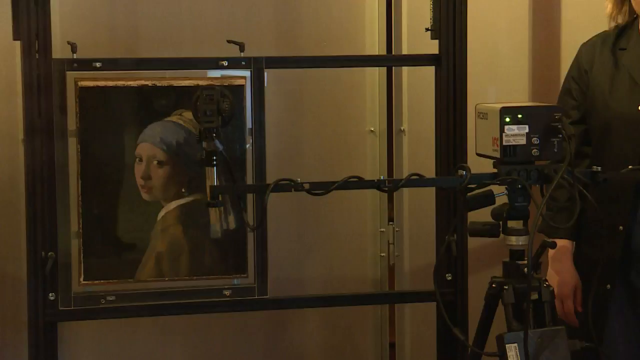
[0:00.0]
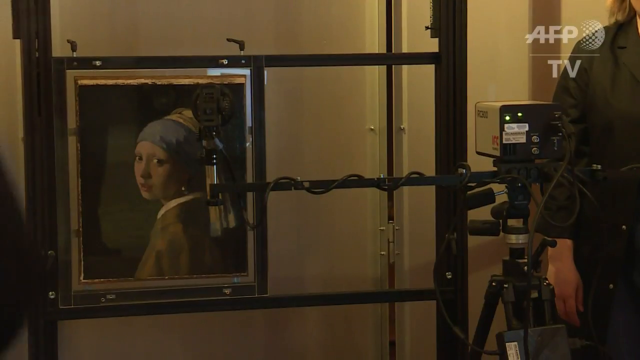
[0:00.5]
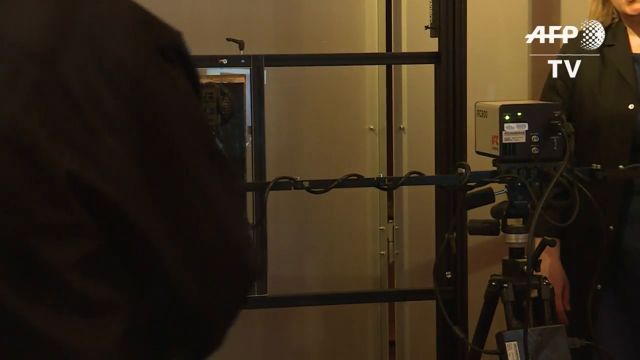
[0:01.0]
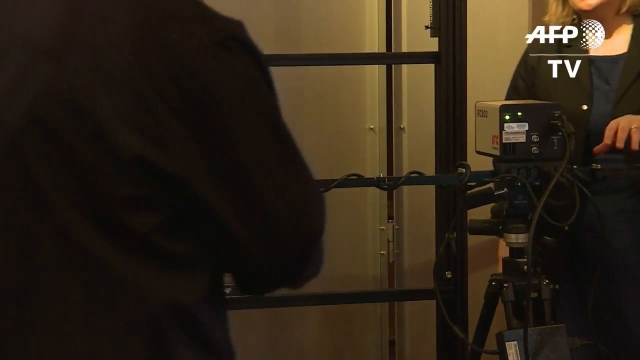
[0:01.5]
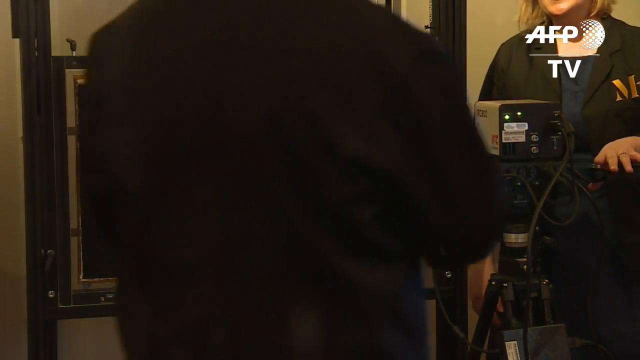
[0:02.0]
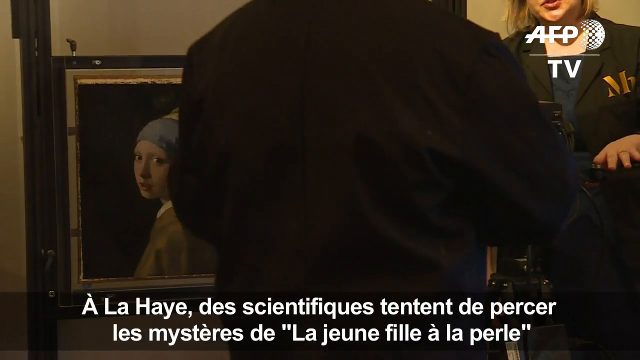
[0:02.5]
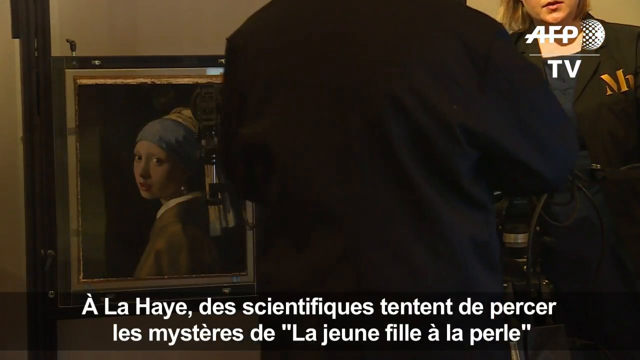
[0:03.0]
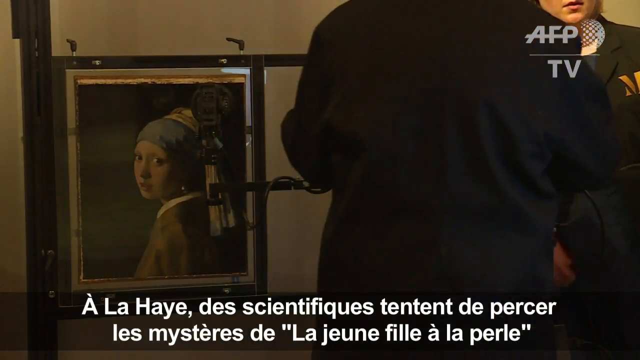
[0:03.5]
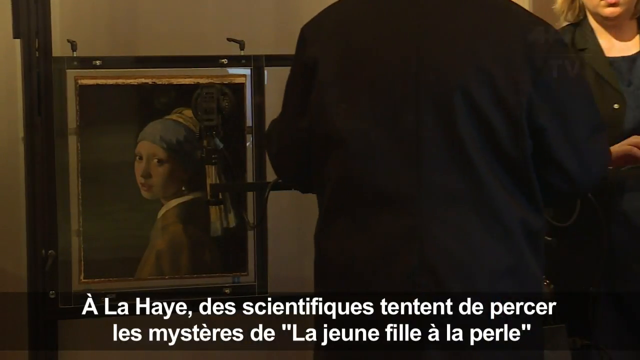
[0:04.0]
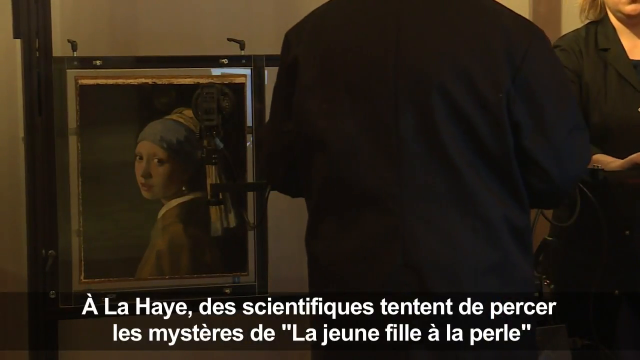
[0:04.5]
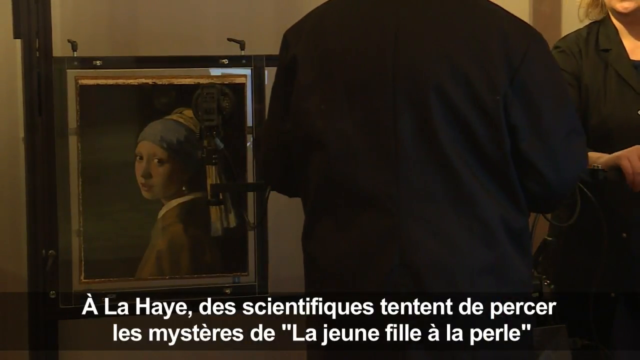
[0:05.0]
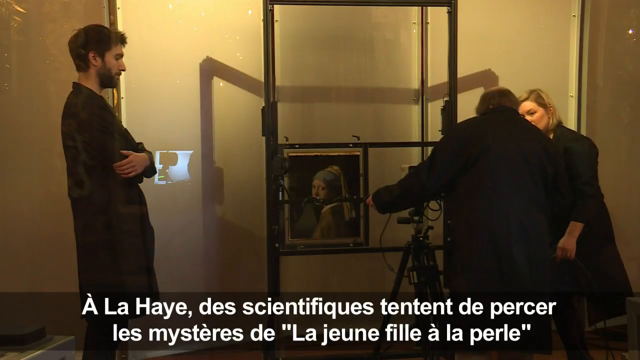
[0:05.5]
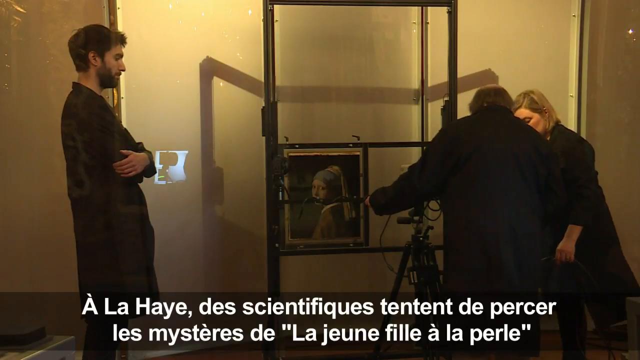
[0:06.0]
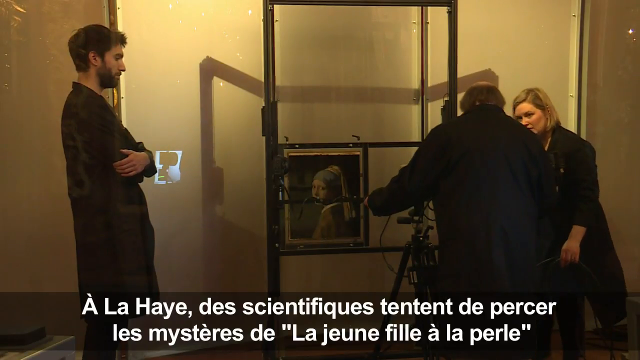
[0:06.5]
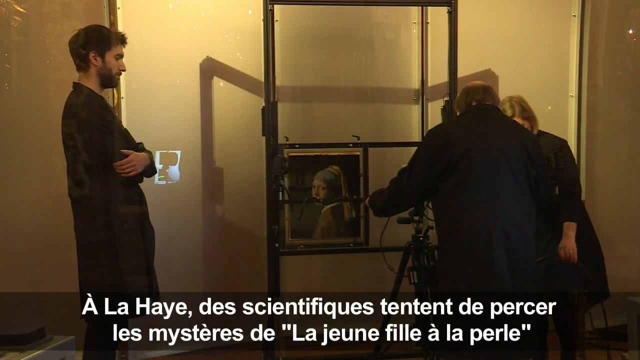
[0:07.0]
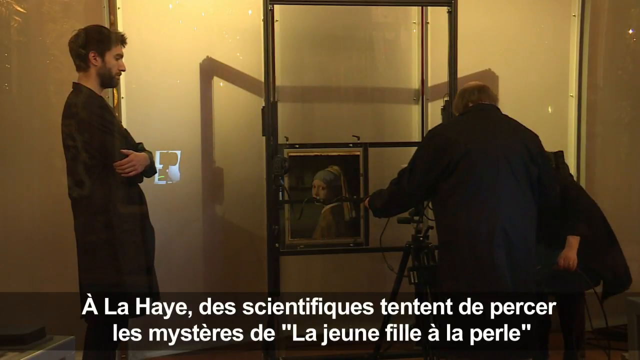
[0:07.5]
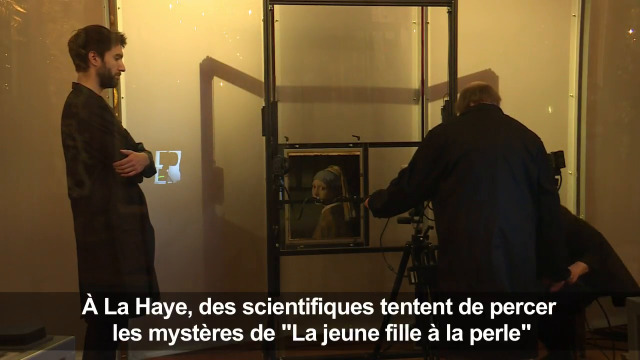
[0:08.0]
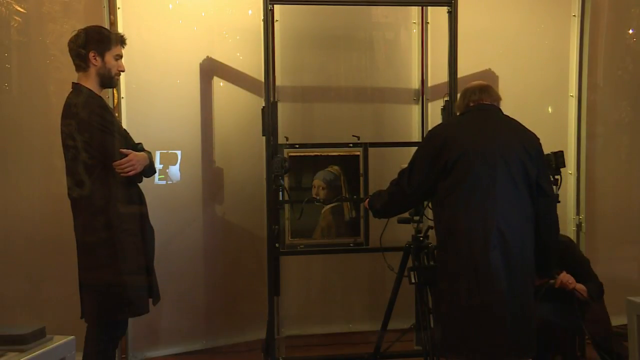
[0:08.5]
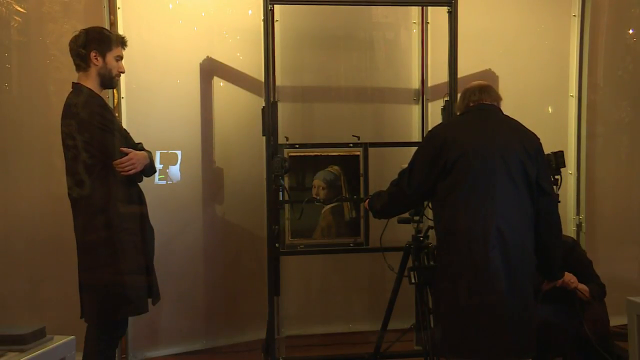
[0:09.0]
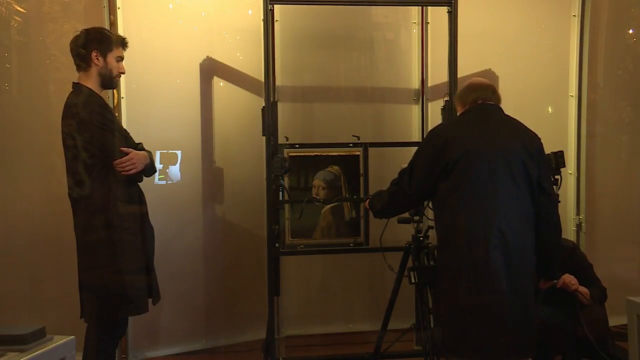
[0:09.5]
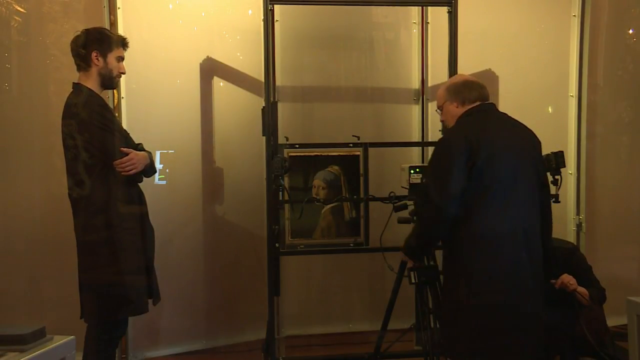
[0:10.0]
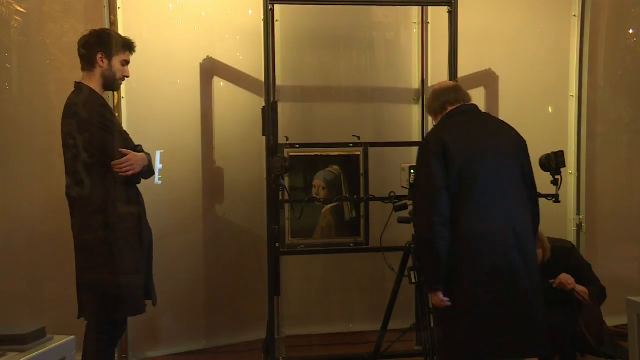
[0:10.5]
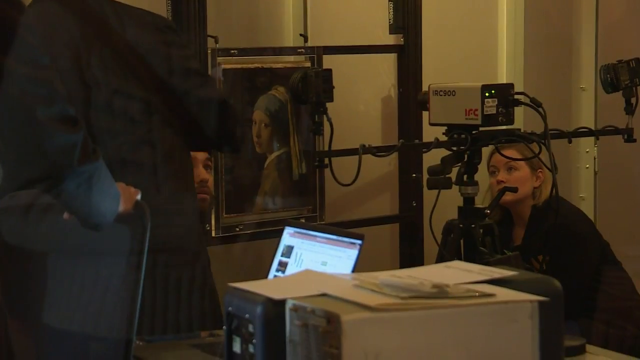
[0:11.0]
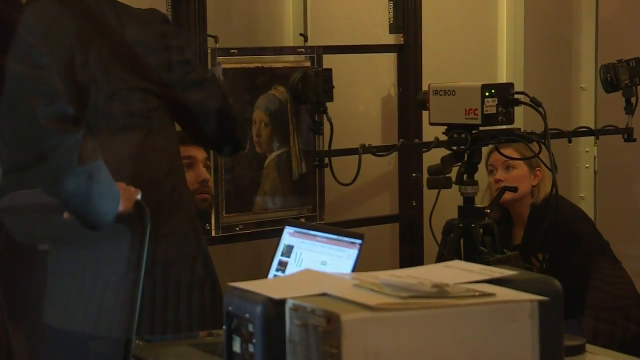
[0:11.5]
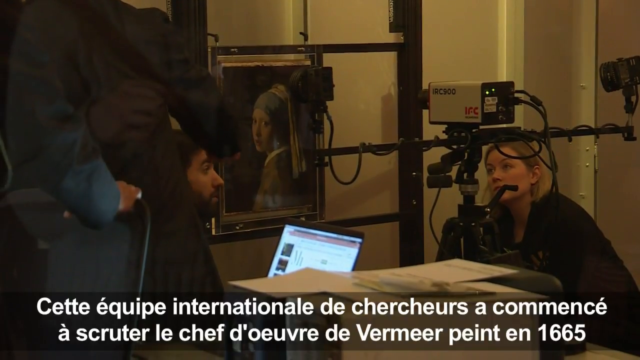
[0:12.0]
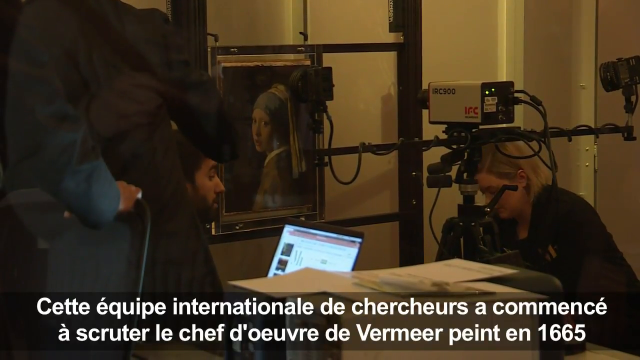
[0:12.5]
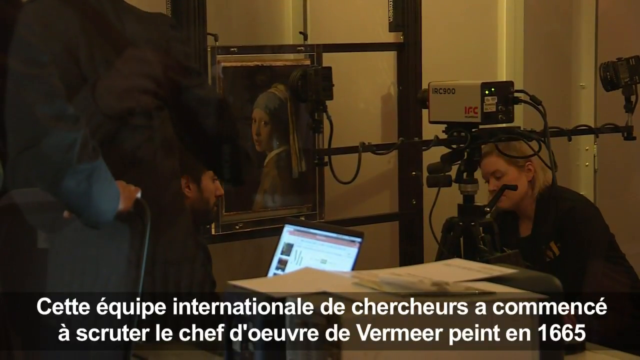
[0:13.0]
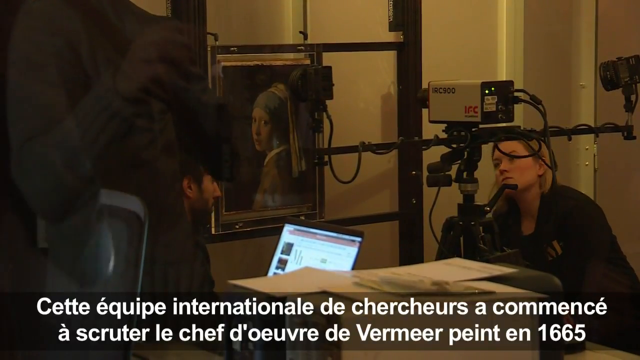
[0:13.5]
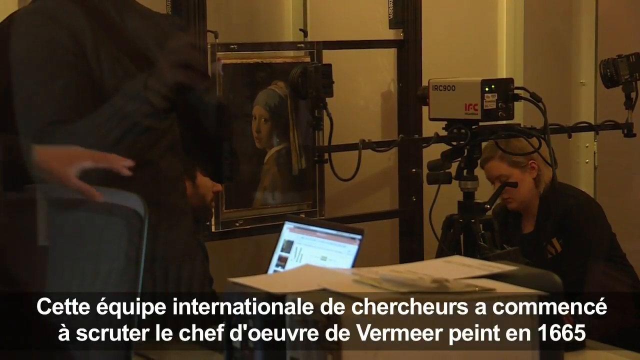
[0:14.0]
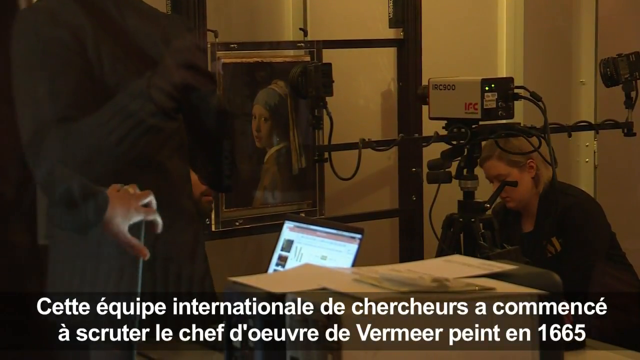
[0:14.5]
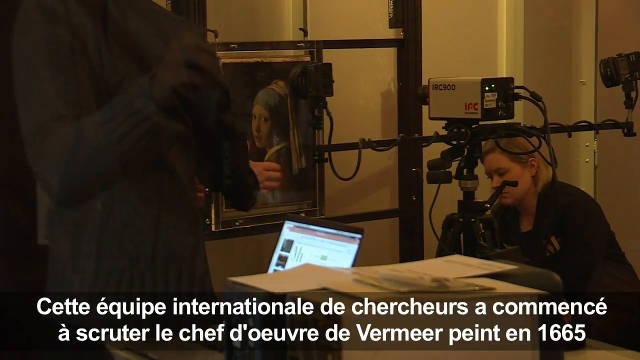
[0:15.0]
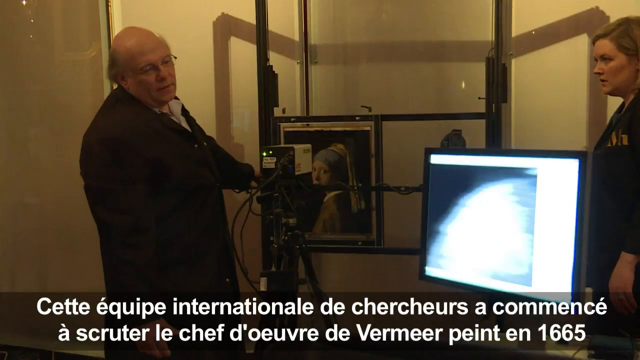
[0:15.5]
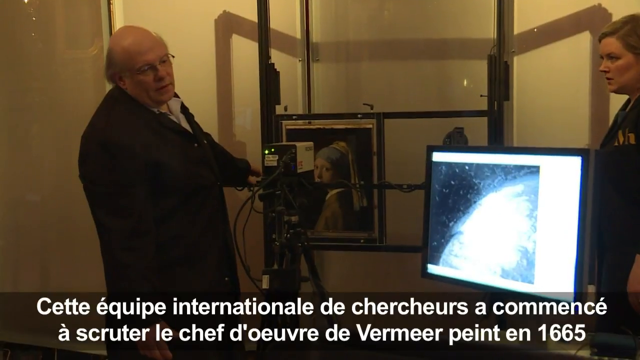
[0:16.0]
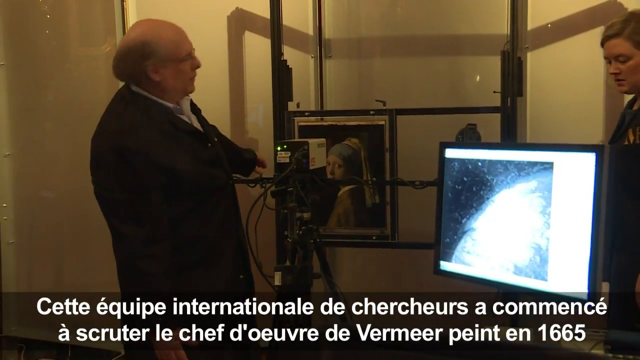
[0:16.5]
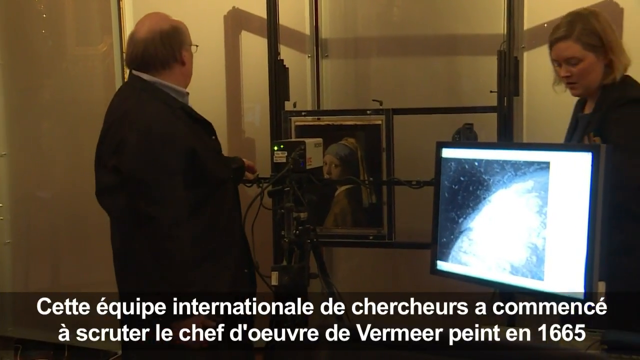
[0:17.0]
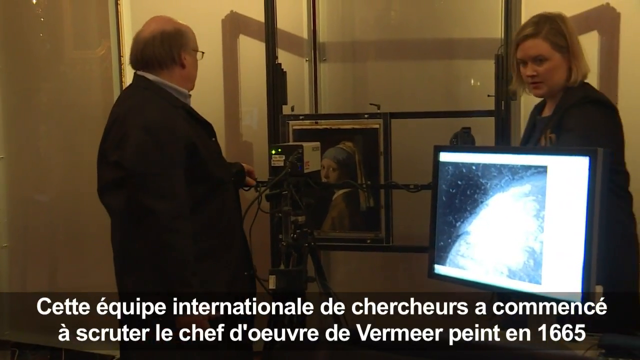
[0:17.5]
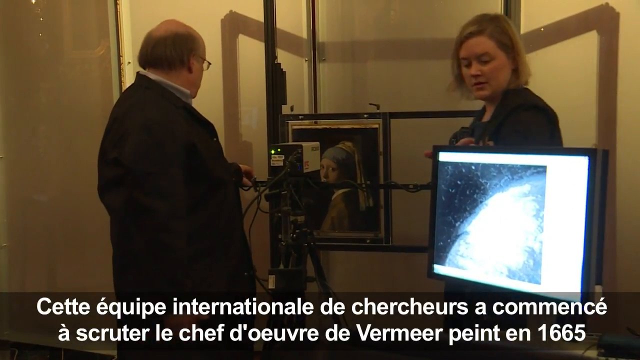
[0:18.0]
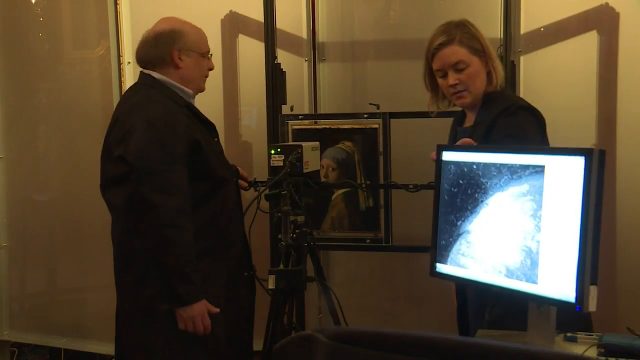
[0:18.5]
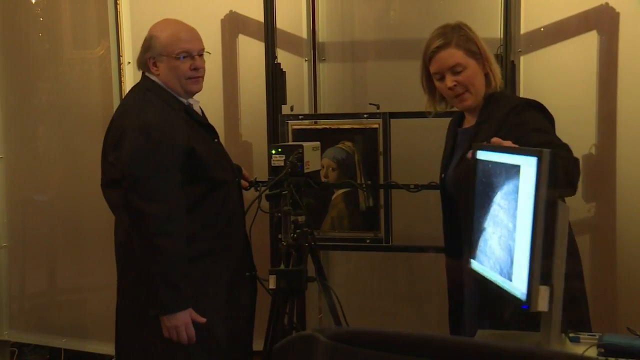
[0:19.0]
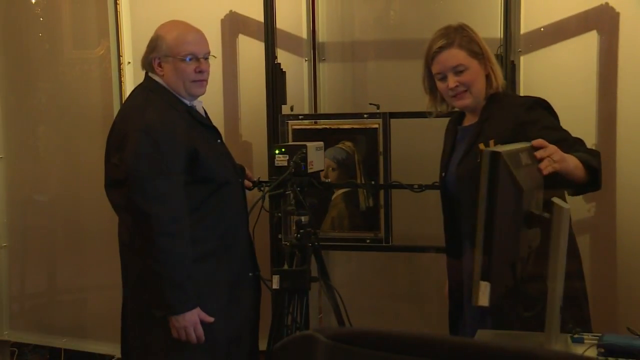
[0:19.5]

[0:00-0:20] What looks like a very famous painting hangs on a wall behind a protective shield of glass with a black frame that slides up, and people appear to be photographing it. A man takes the photograph, while a man to the left and a woman to the right appear to observe. They appear to be making a copy of it onto a computer to evaluate. There is writing underneath in an unfamiliar language, almost like subtitles. The man taking the picture and the woman on the right are dressed in normal attire. The painting is shown, and then the computer screen, but the computer does not show the painting; it looks like a picture from outer space or something, so they apparently are zooming in on some part of it.